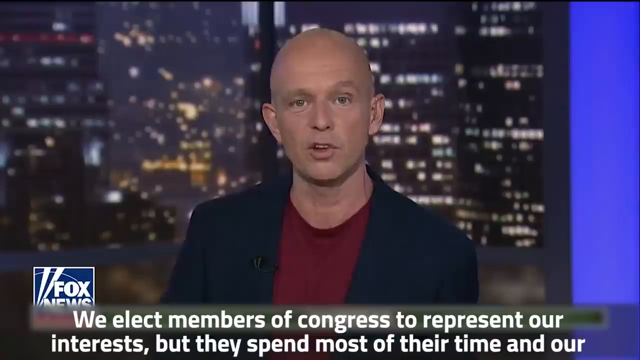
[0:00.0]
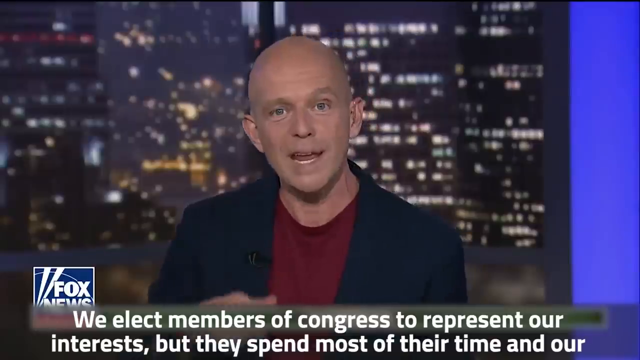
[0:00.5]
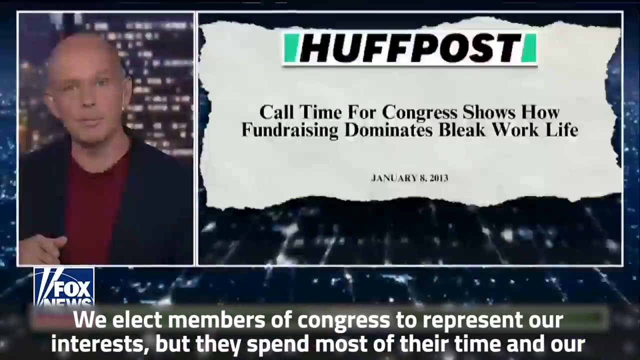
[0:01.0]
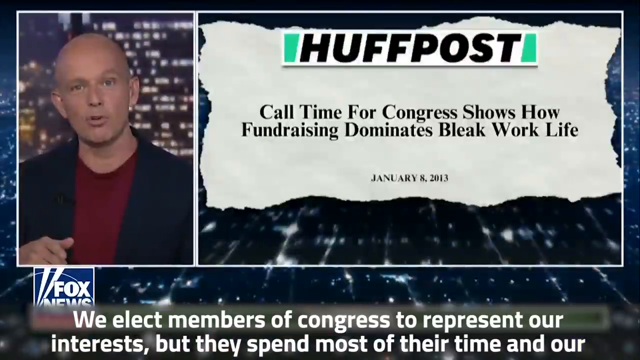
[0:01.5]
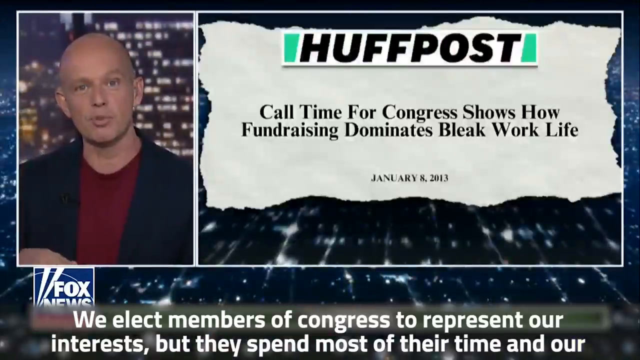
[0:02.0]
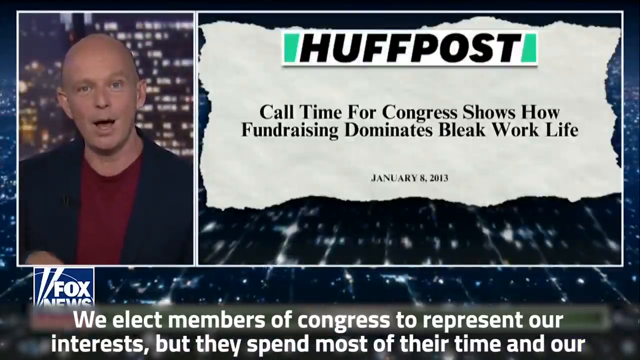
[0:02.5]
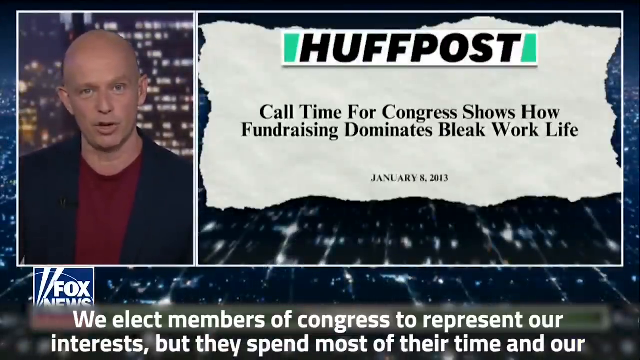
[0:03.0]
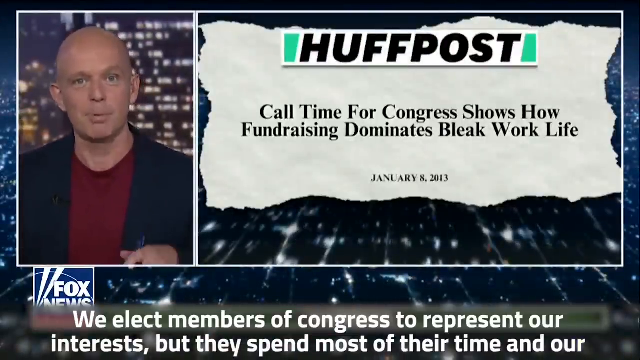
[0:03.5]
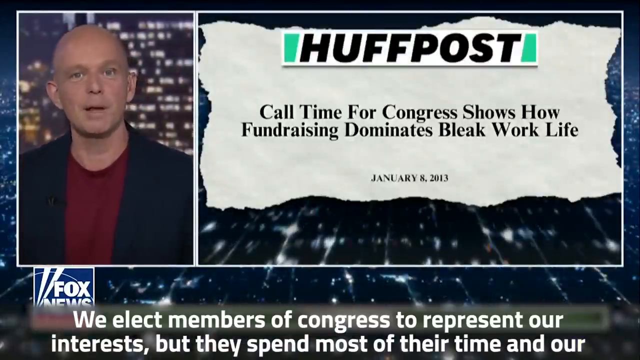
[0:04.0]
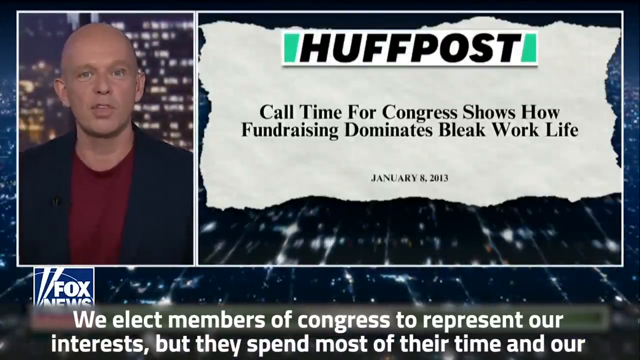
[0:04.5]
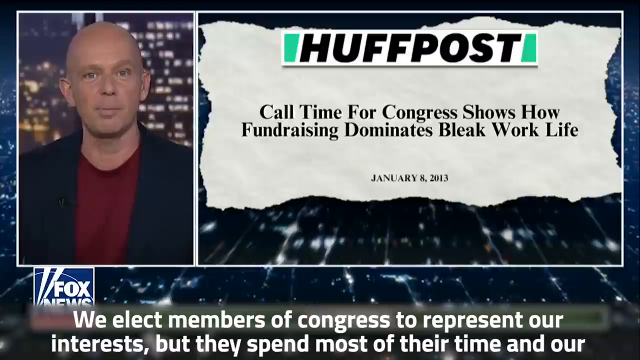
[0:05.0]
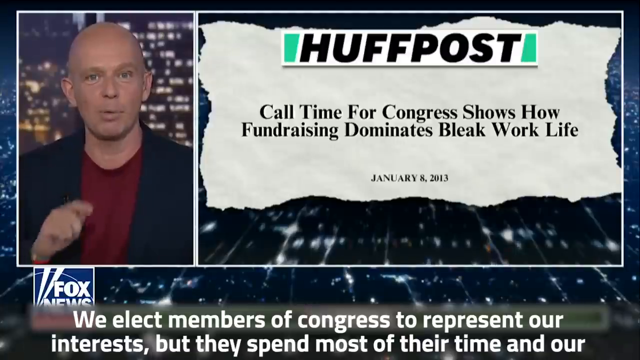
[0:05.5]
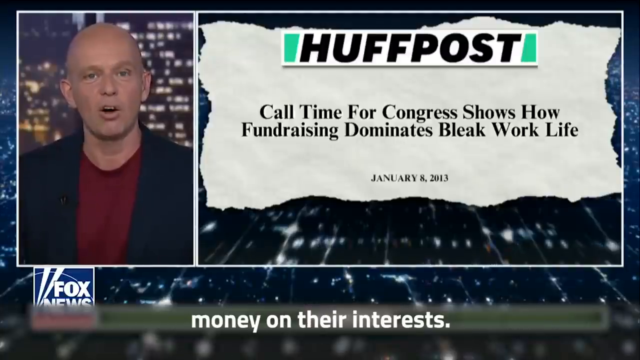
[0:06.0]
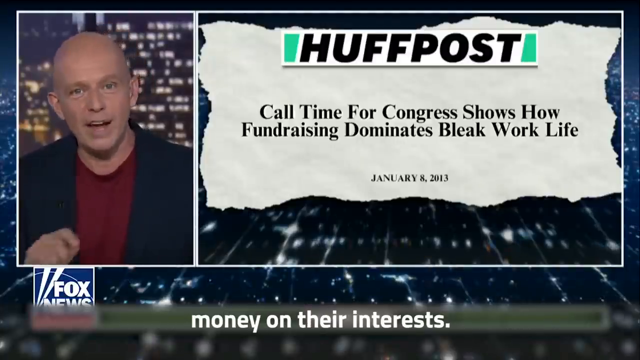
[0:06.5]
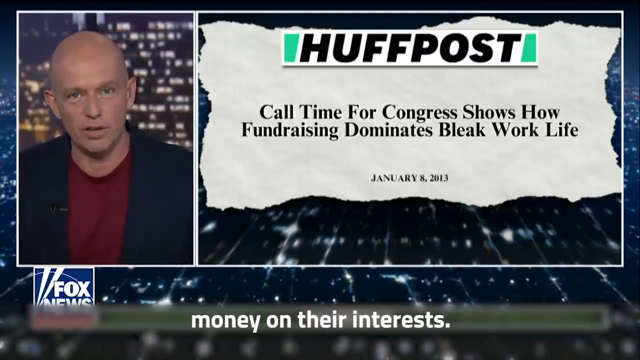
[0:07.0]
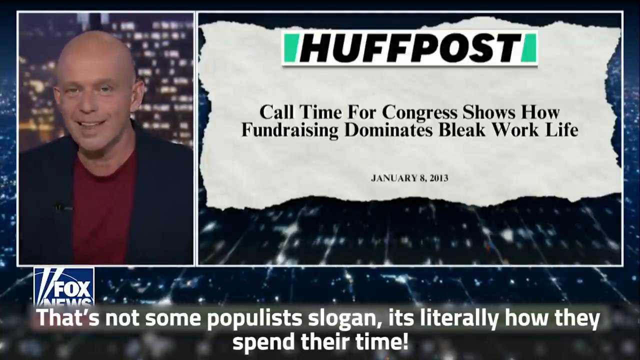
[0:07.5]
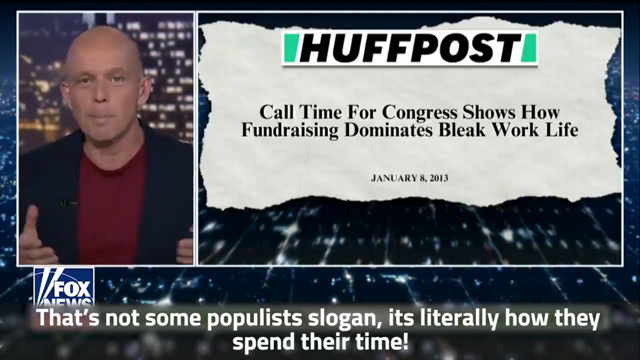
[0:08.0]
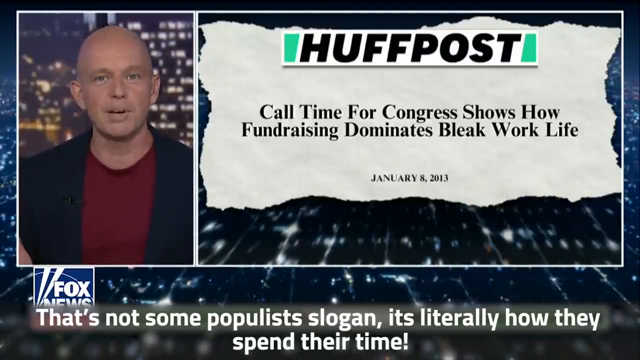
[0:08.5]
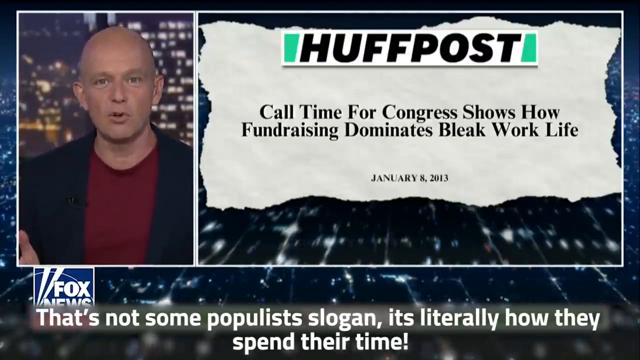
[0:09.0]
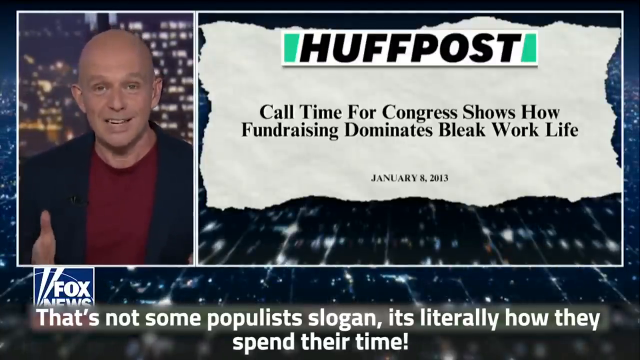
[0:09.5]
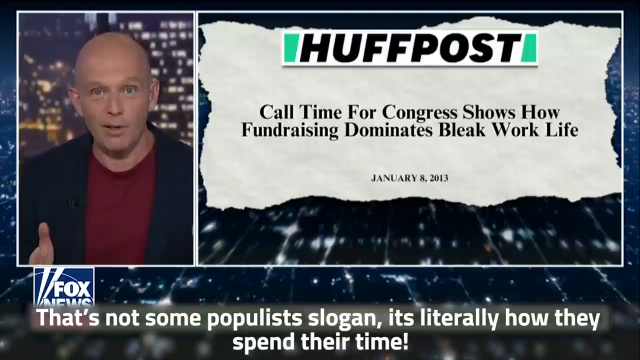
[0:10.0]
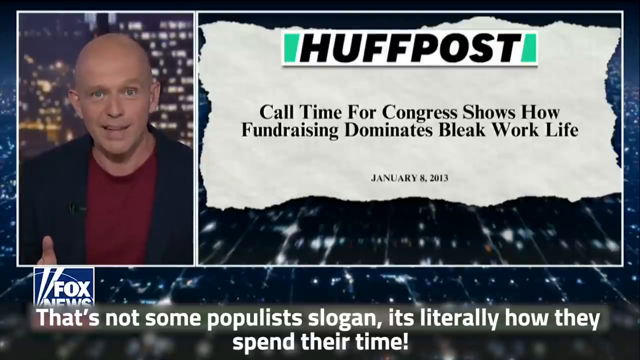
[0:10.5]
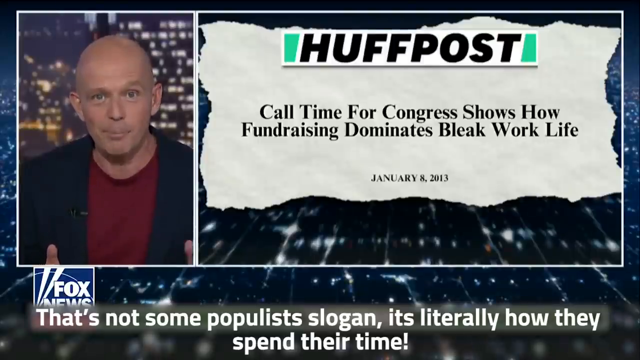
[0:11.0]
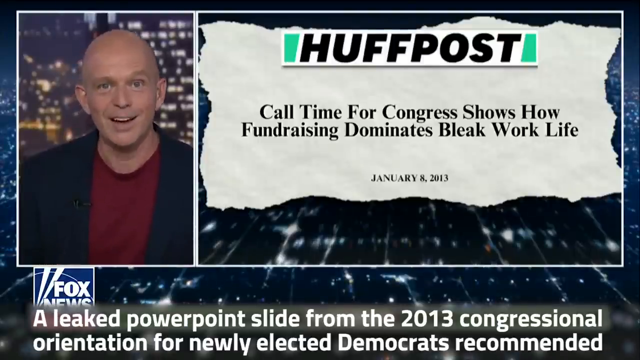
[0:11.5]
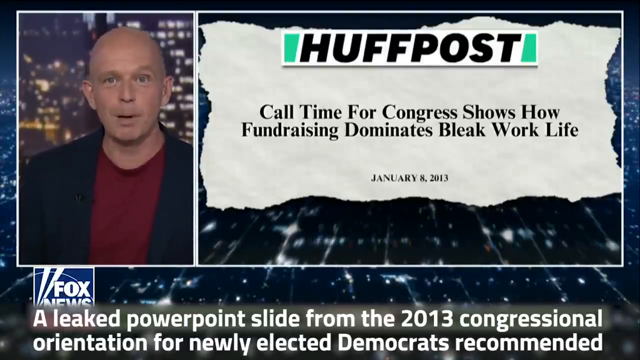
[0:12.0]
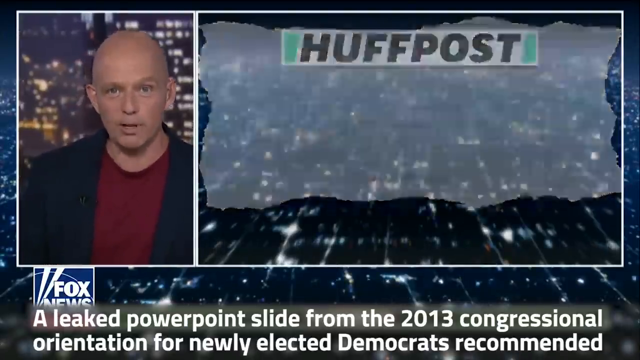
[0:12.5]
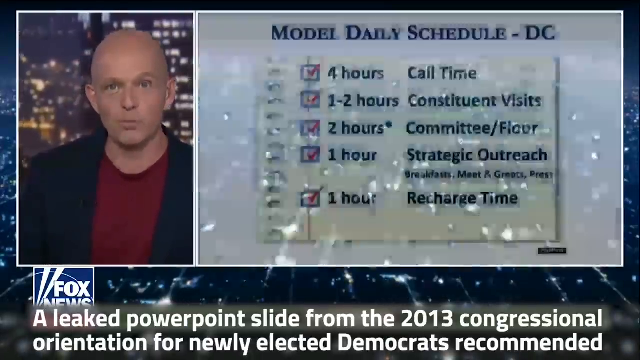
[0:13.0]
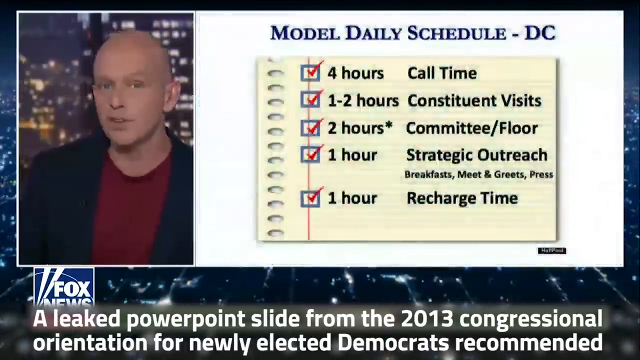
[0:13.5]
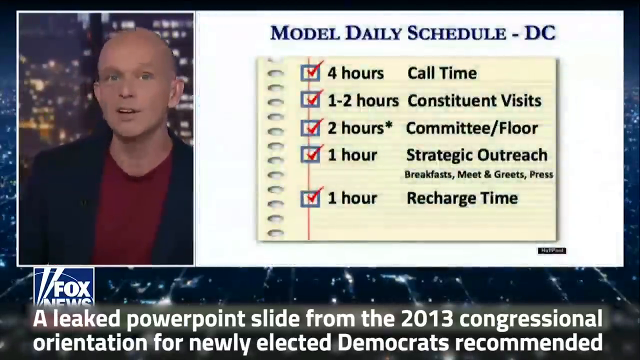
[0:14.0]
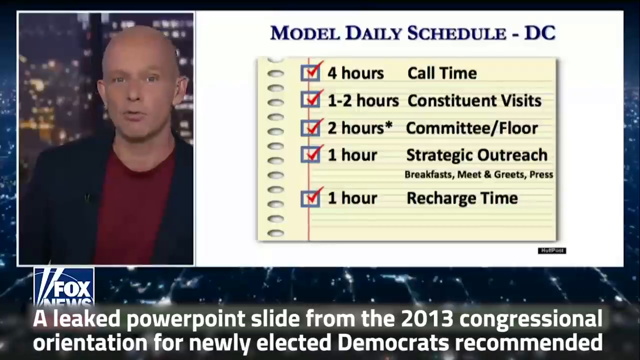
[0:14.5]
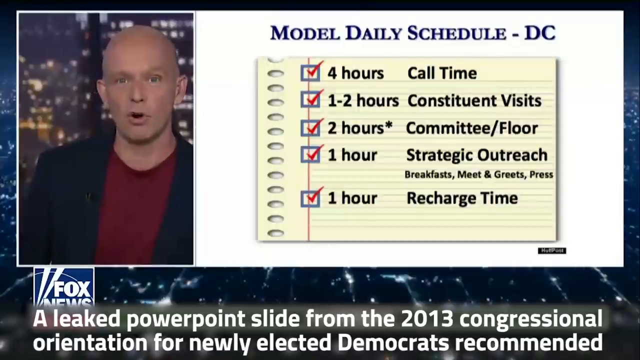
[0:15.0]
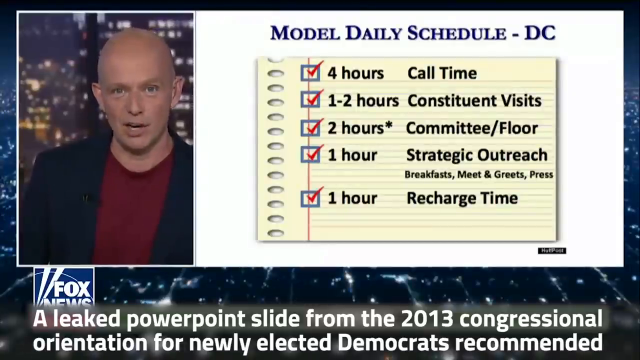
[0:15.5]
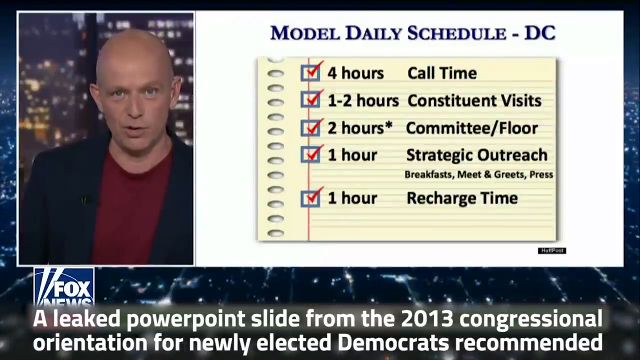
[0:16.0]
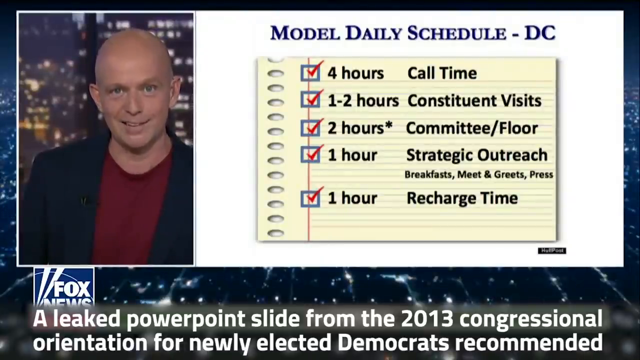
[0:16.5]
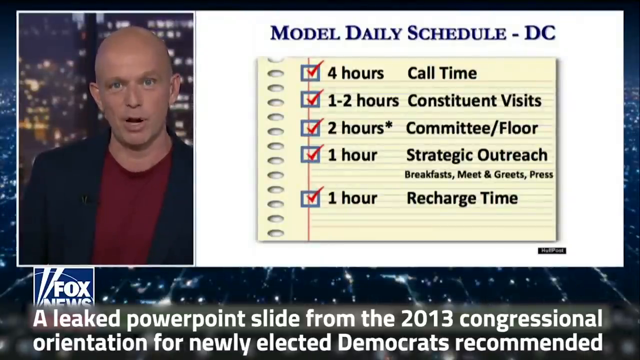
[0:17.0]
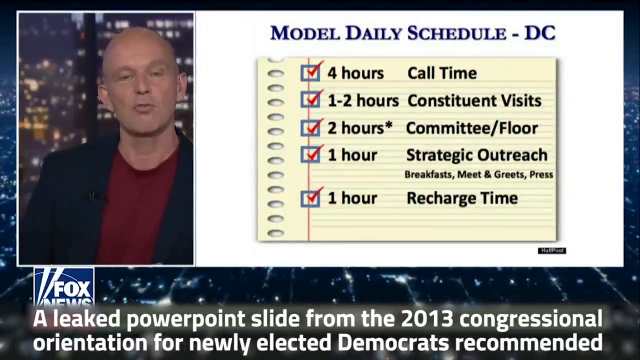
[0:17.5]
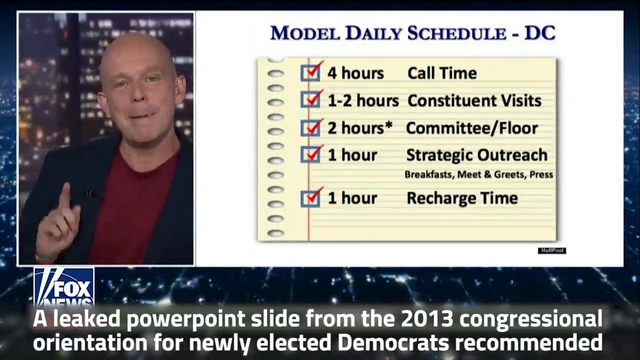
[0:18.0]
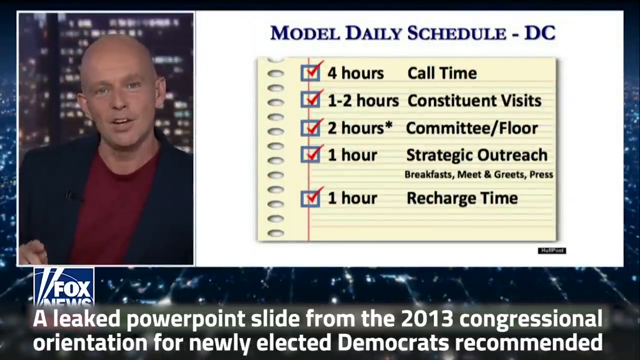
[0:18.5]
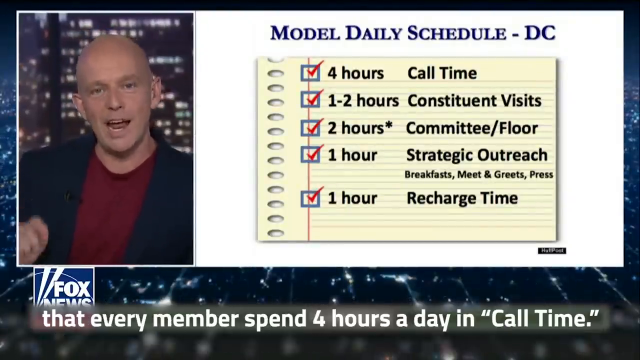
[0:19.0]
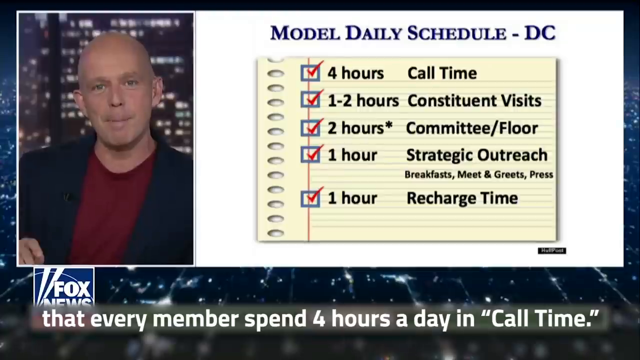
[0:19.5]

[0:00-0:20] A news presenter, a white man with a bald head wearing a maroon shirt and a blue blazer, reads the news. Behind him is a city at night. On-screen text reads "we elect members of Congress to represent our interest, but they spend most of their time and our money on their interest," followed by a mention of the 2013 Congressional Orientation for Newly Elected Democrats and that every member spends four hours. Beside the presenter is a newspaper article from The Huff Post headlined "Call time for Congress shows how fundraising dominates bleak work life," dated January 2013. A model daily schedule also appears, listing four hours of call time, one to two hours of constituent visits, two hours of committee floor, one hour of strategic outreach and one hour of recharge time.